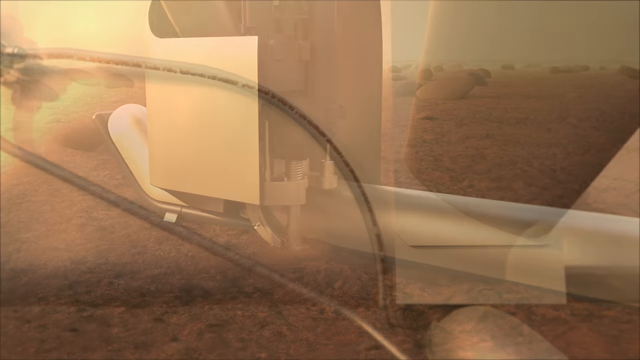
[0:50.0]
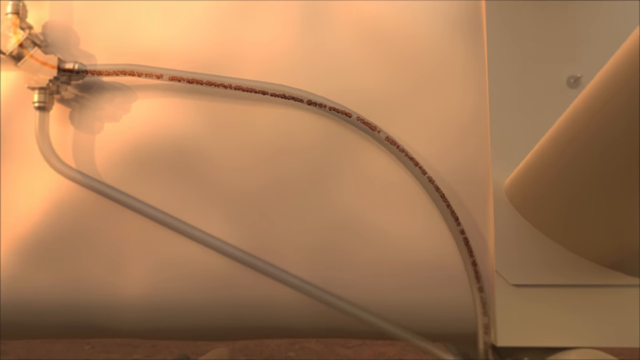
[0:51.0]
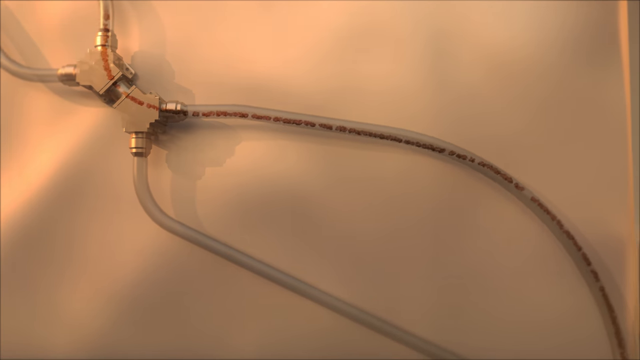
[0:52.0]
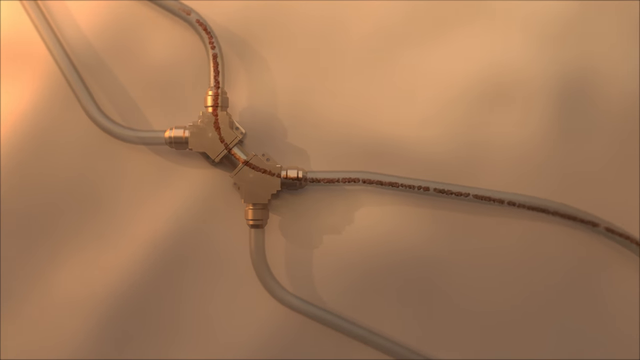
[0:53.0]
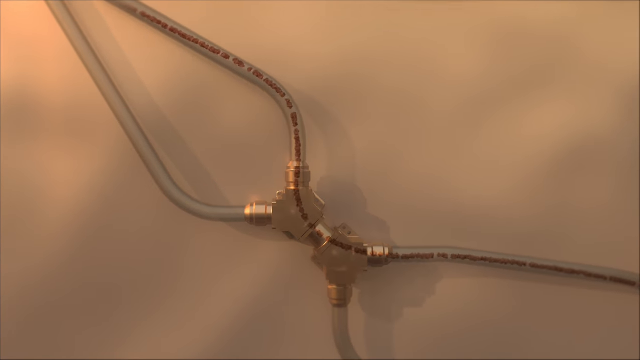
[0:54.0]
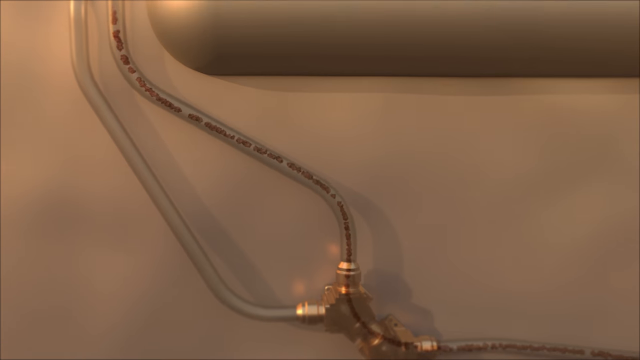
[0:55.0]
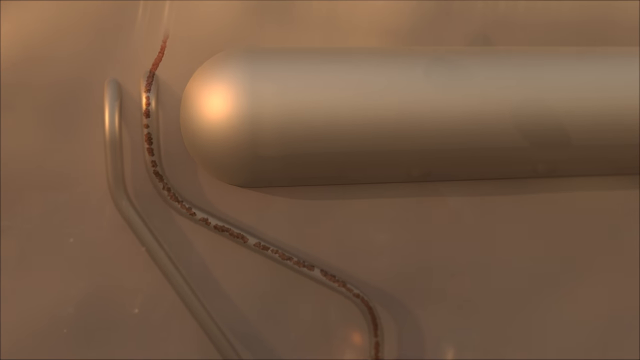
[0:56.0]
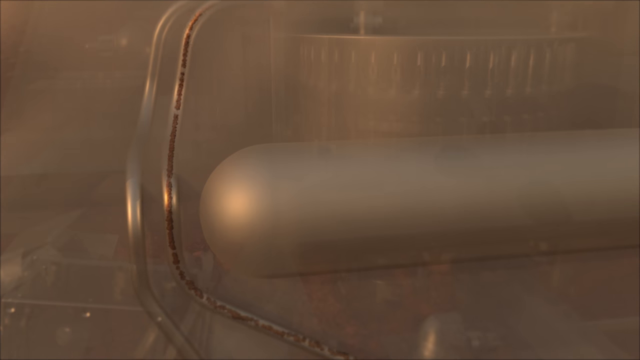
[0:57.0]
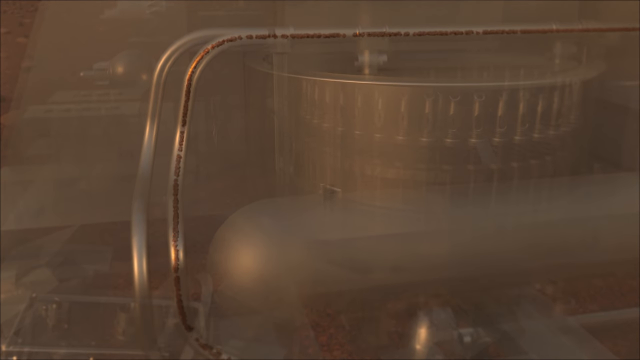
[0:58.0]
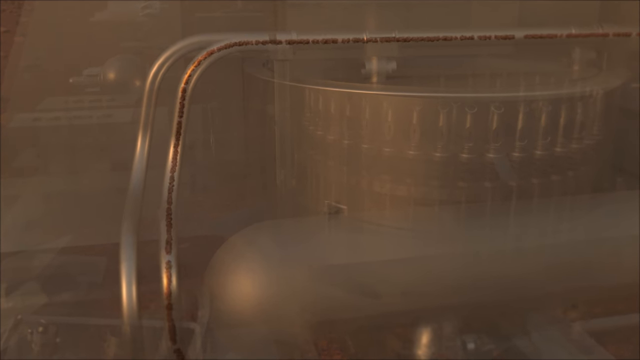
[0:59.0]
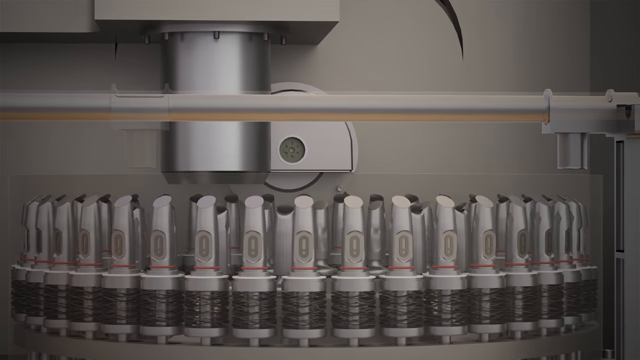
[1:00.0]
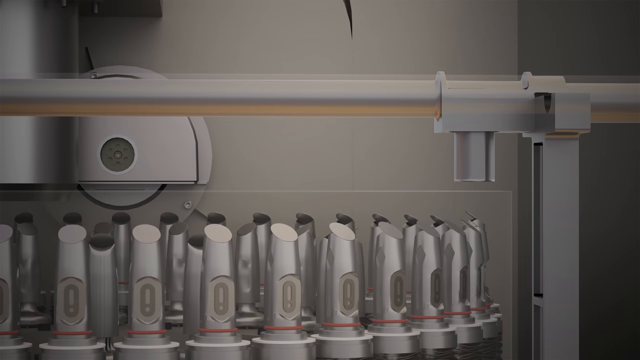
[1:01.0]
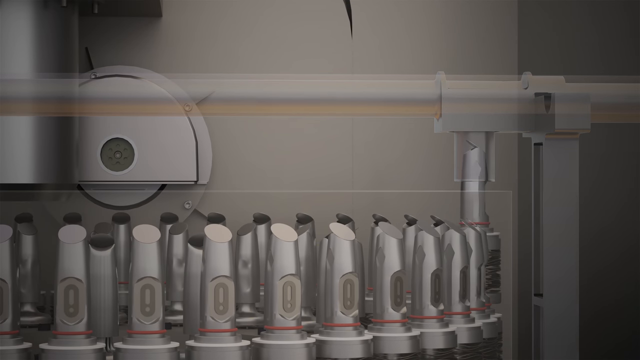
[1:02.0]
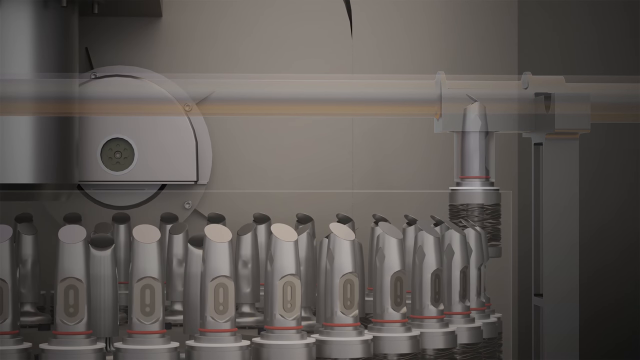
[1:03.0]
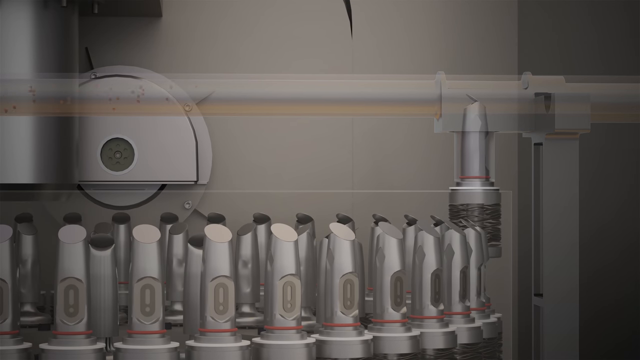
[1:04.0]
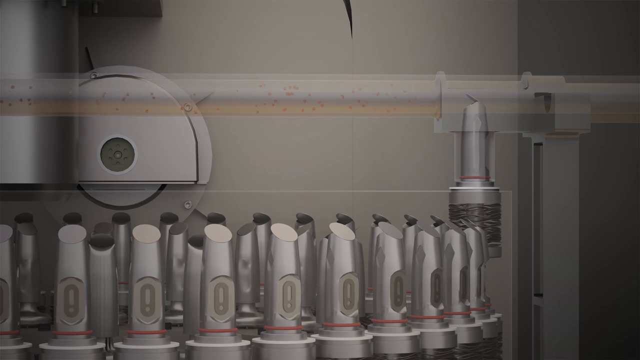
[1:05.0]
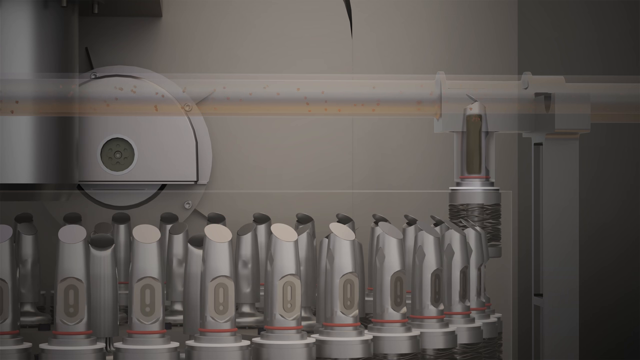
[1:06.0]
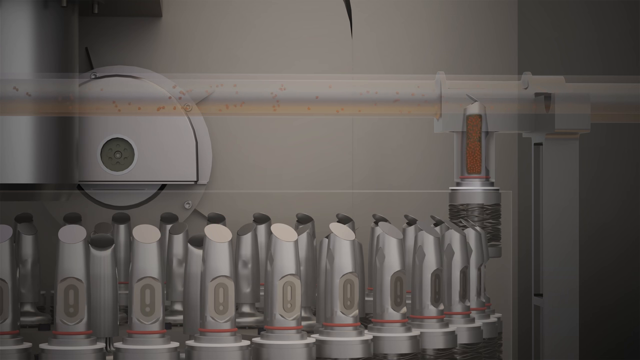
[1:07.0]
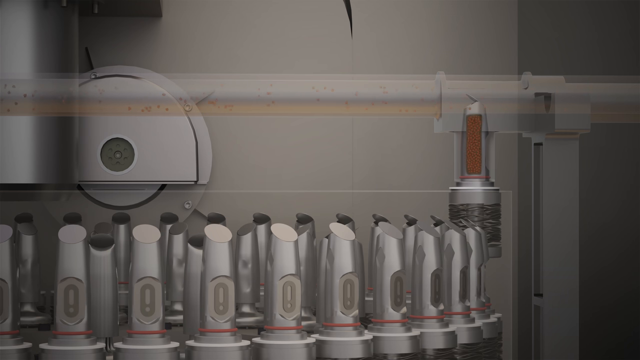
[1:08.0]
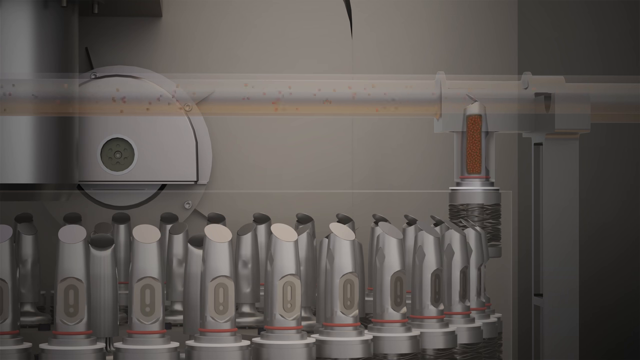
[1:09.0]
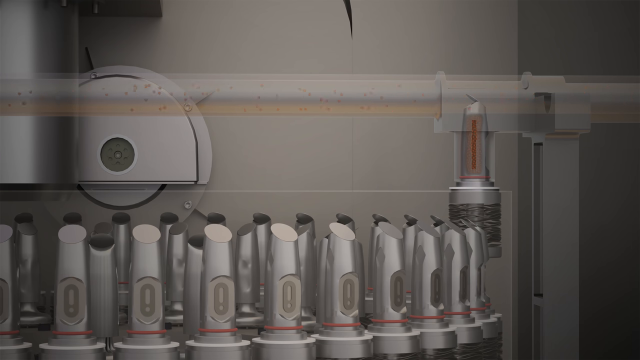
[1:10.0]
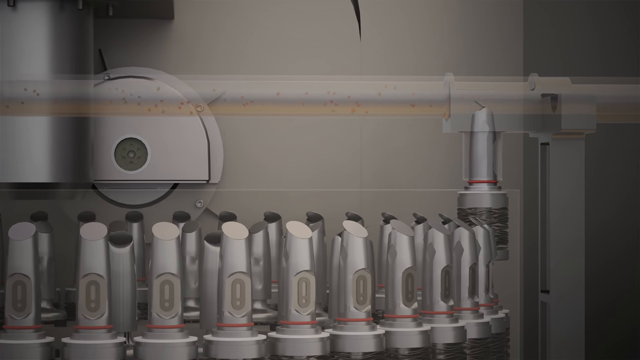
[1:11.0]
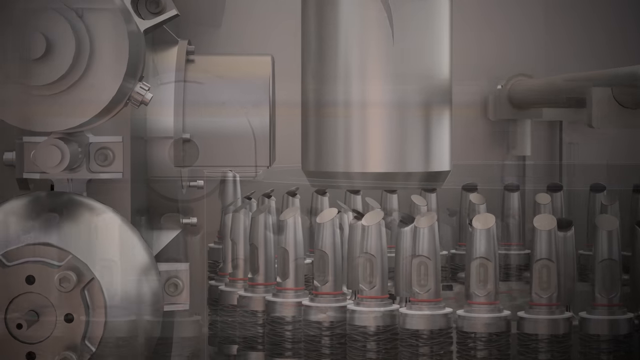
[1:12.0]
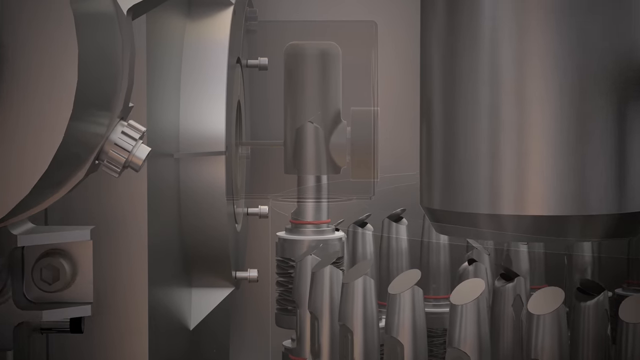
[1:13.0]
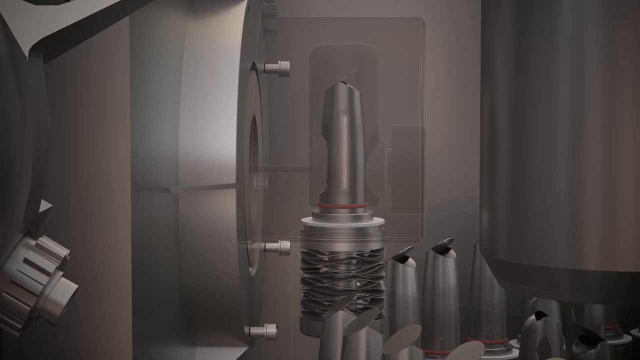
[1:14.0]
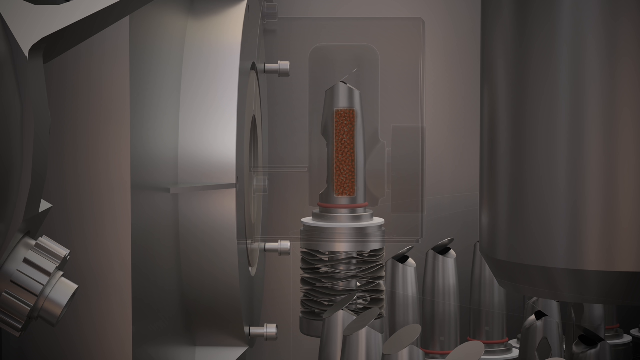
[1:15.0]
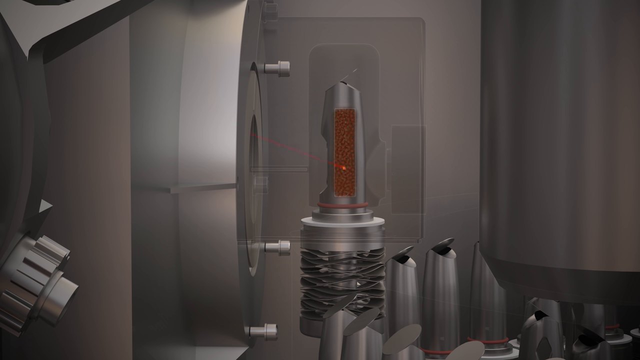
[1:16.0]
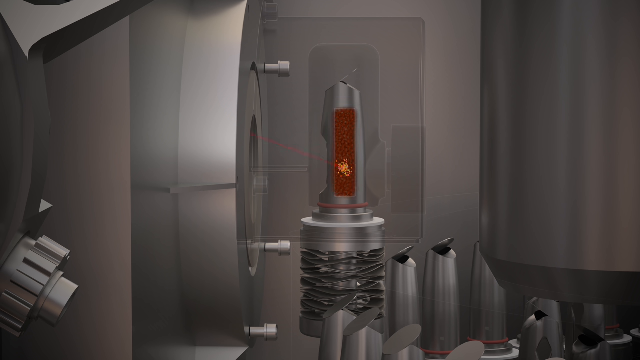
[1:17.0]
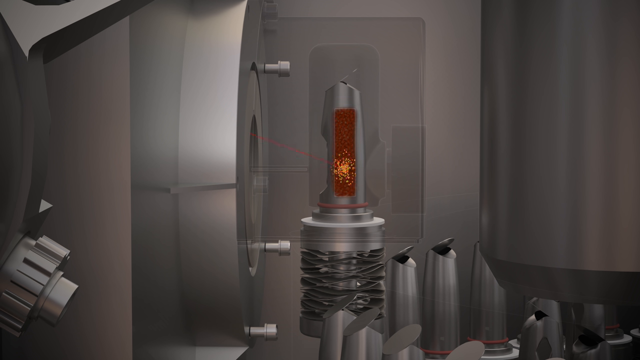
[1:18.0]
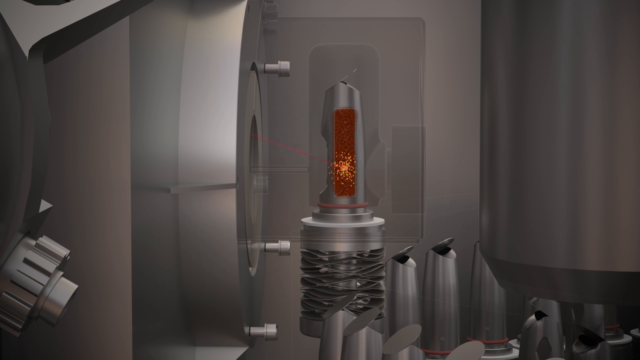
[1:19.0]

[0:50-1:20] The camera moves slowly from right to left, apparently zoomed in on the drone. Some wires are up against one of the drone's side panels. Inside a tube there appear to be little black pieces moving upward and around; the tube goes upward and then toward the right. The view moves inside, where there is a metal background and seemingly several metal pieces moving upward, especially the metal piece on the right: it moves up and meets a bar running parallel, devices move left to right through the bar to meet that metal piece, and then it starts to come down. The view transitions to another part of the inside, presumably of the drone, zooming in on one area. A metal piece has moved up and is filling with some kind of brown particles, and a laser beam goes directly into the center of the area where the brown particles are.